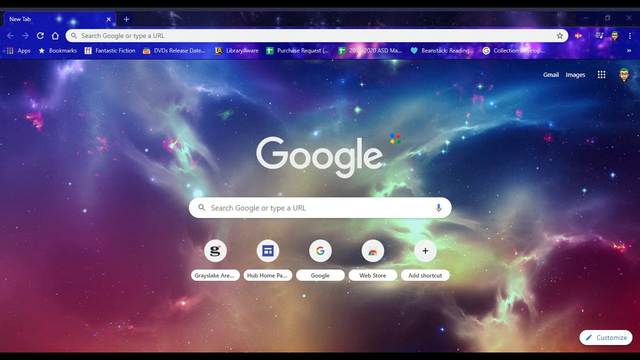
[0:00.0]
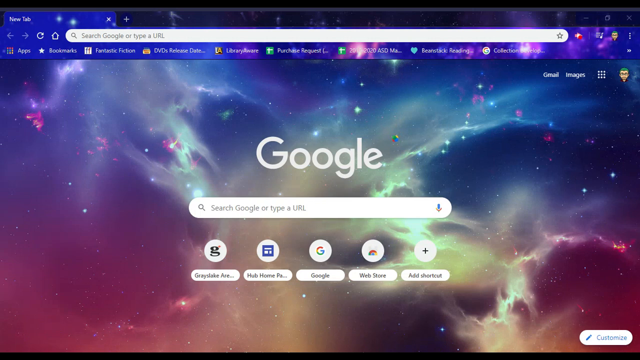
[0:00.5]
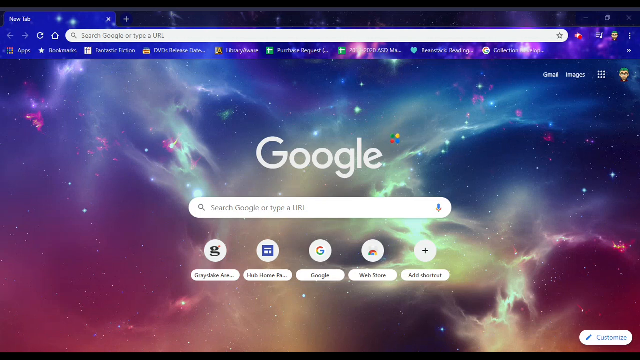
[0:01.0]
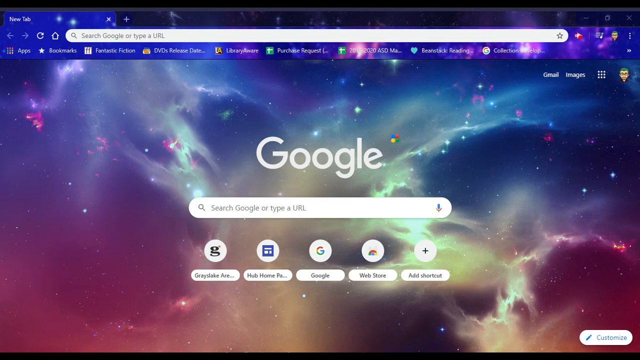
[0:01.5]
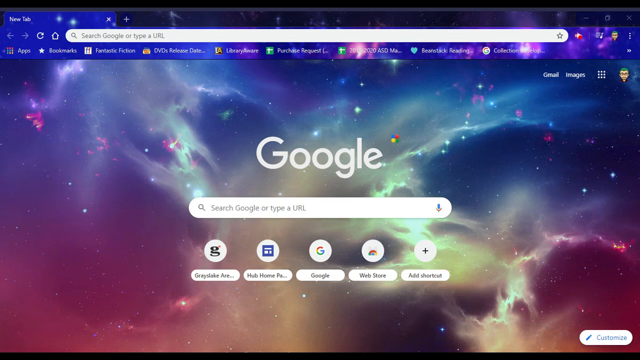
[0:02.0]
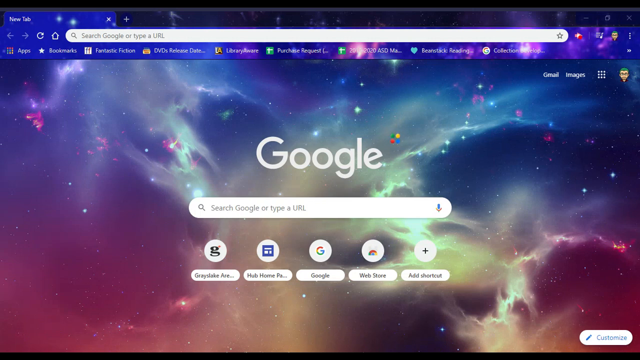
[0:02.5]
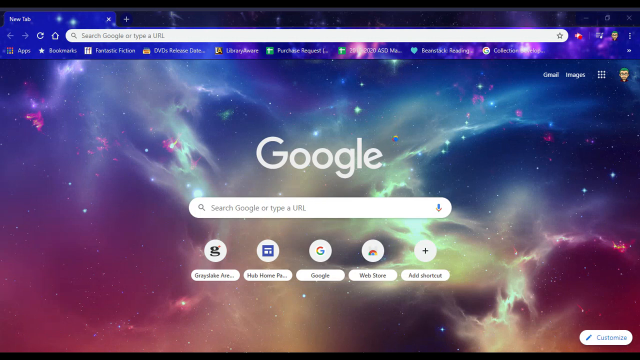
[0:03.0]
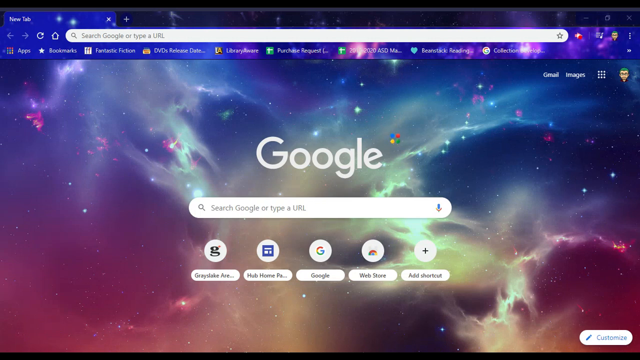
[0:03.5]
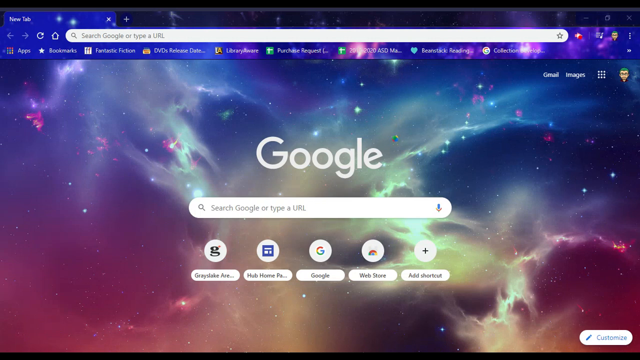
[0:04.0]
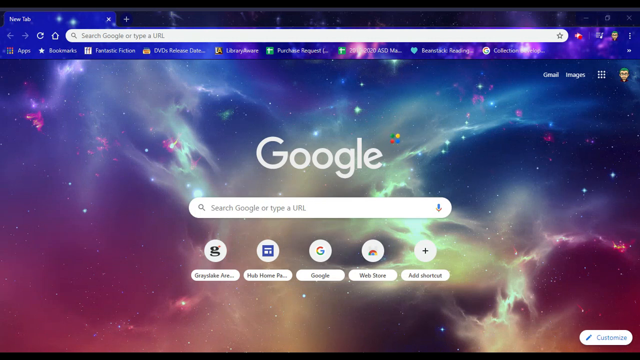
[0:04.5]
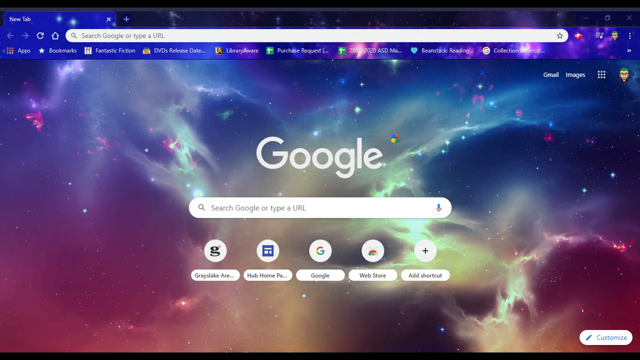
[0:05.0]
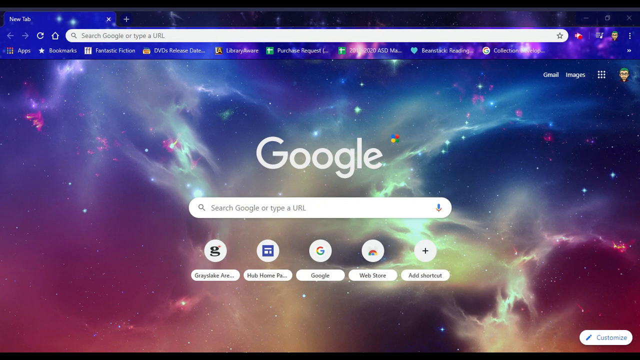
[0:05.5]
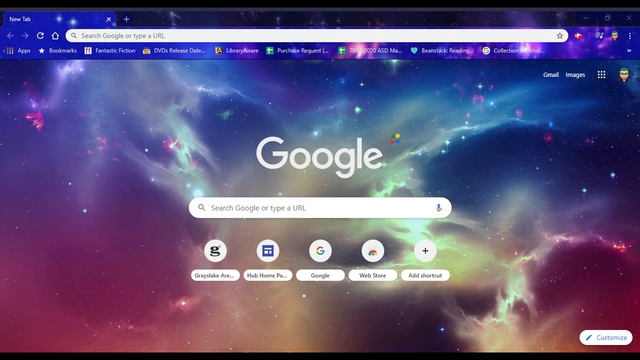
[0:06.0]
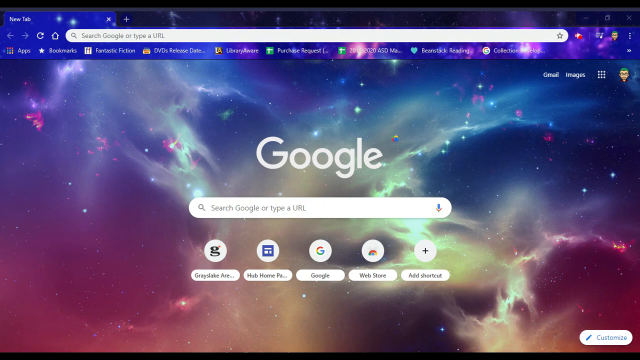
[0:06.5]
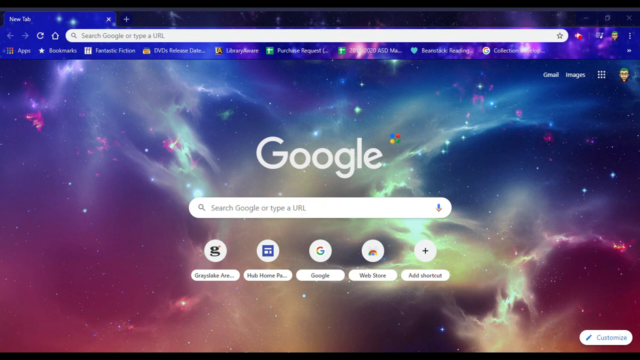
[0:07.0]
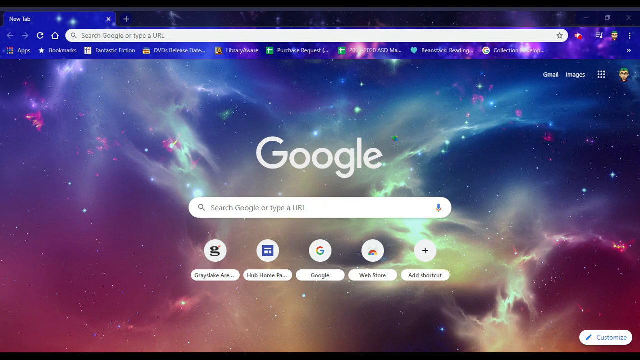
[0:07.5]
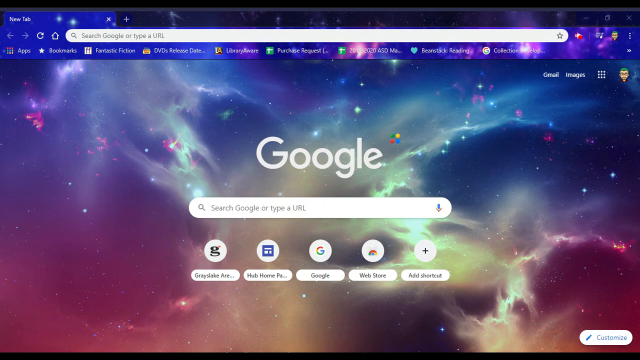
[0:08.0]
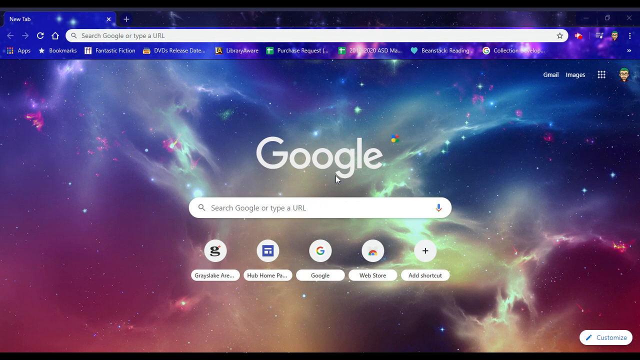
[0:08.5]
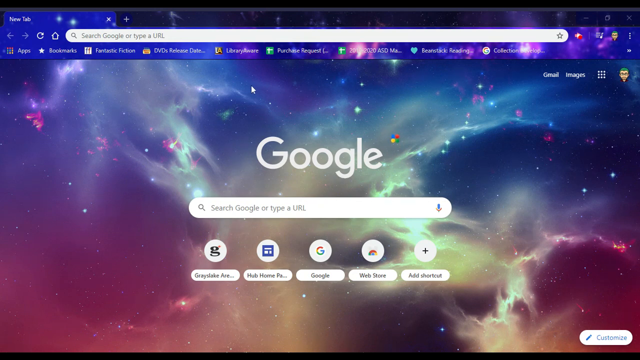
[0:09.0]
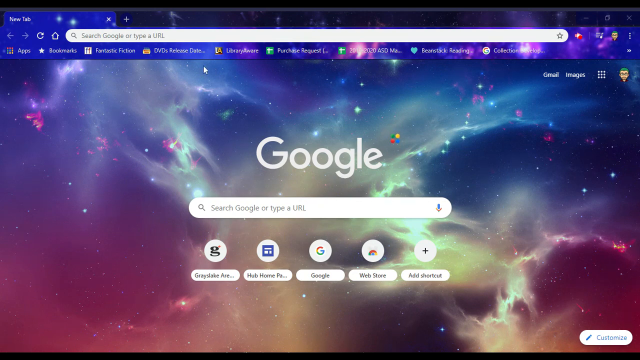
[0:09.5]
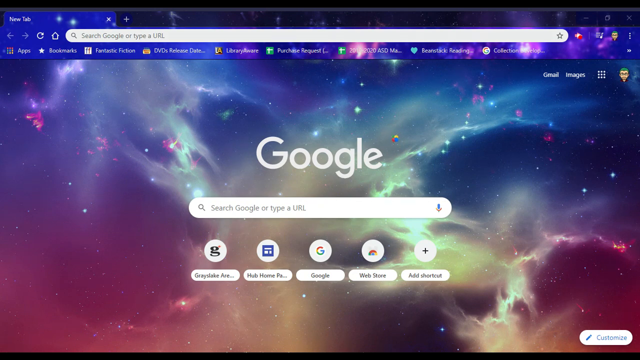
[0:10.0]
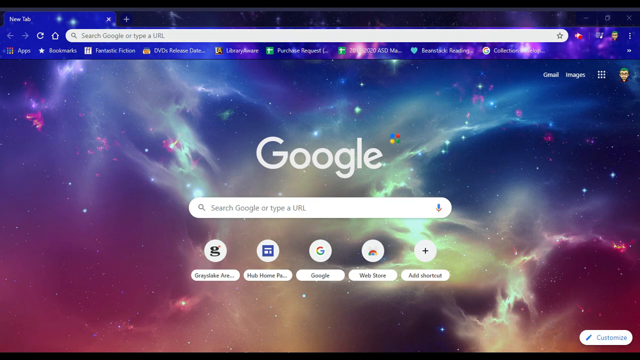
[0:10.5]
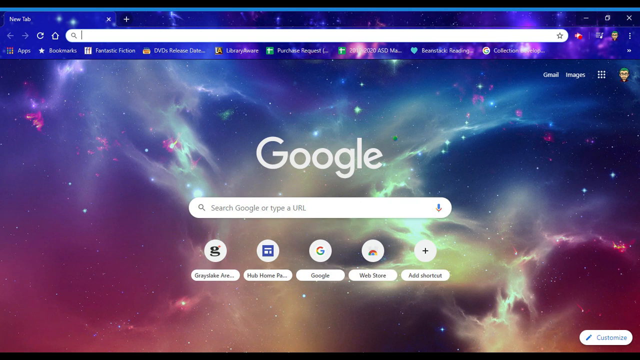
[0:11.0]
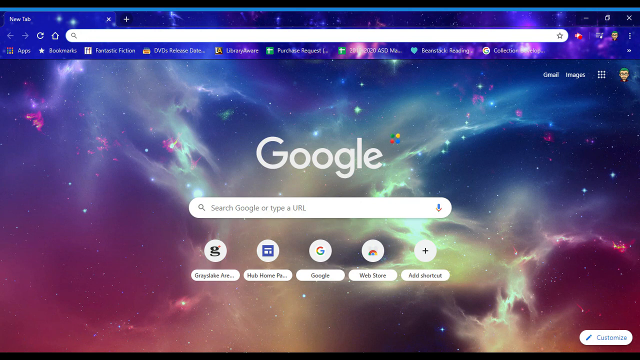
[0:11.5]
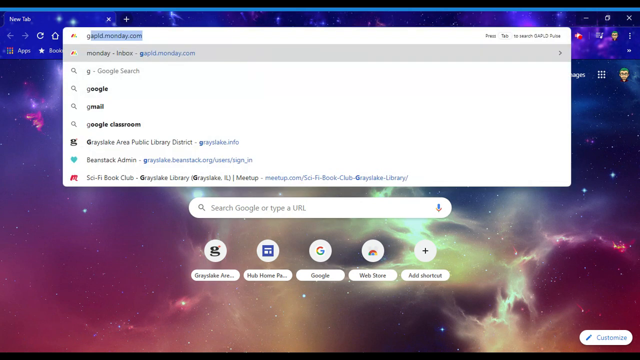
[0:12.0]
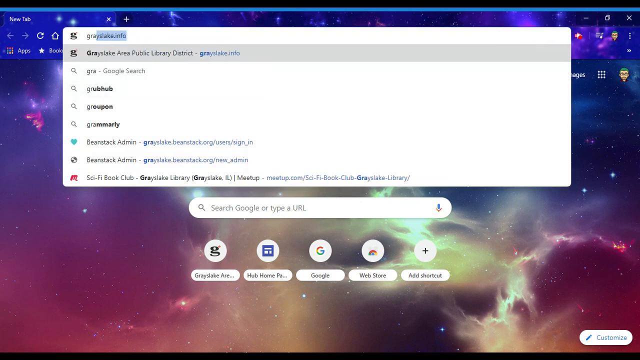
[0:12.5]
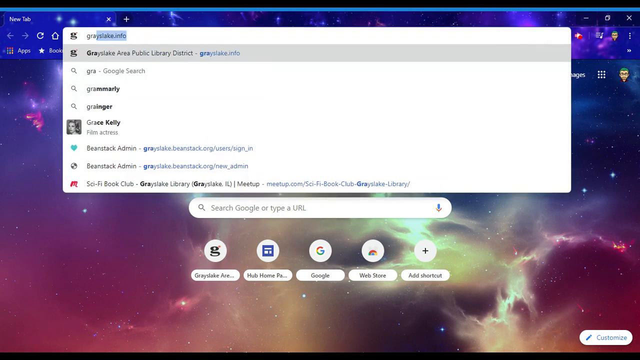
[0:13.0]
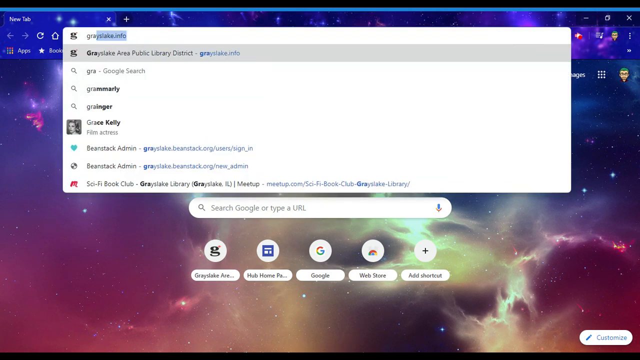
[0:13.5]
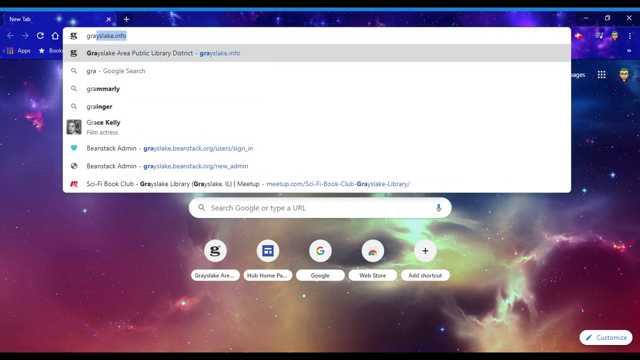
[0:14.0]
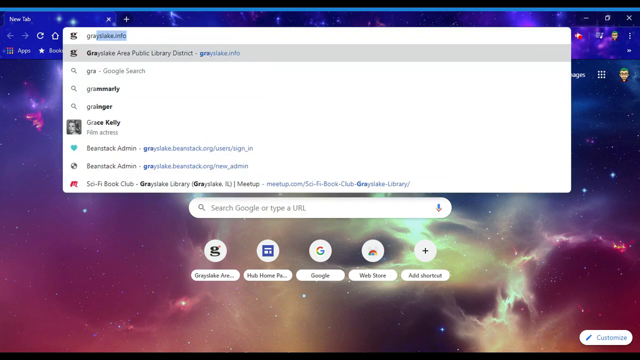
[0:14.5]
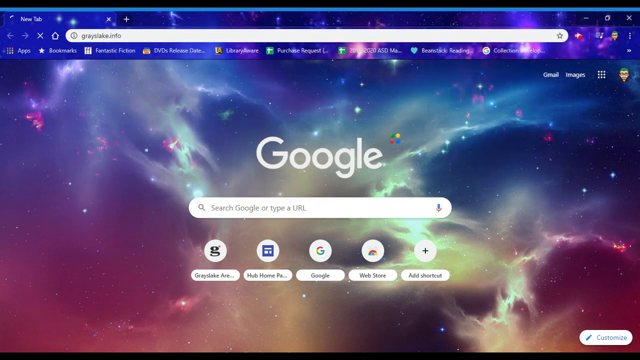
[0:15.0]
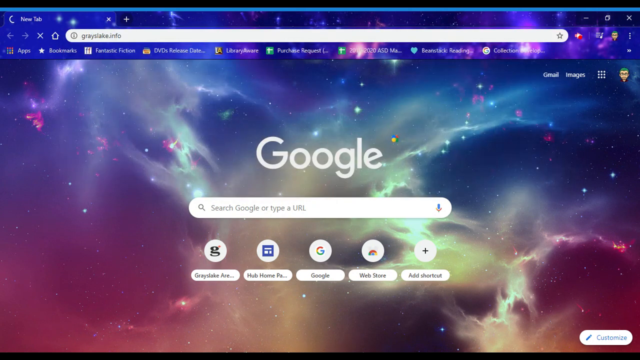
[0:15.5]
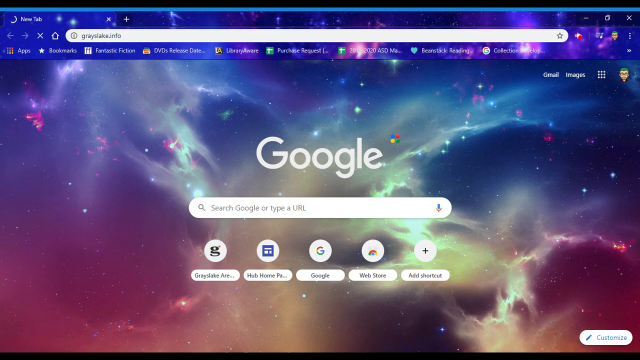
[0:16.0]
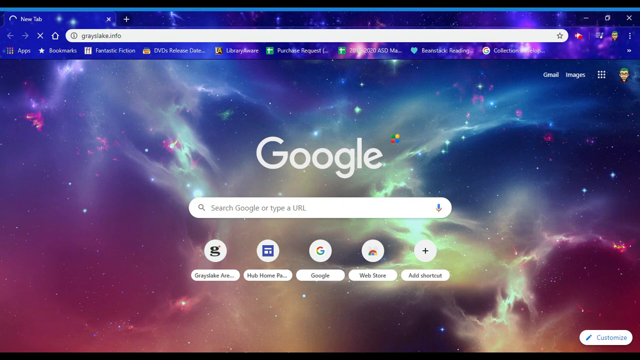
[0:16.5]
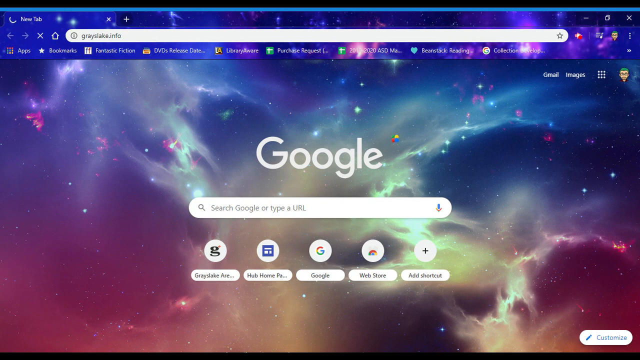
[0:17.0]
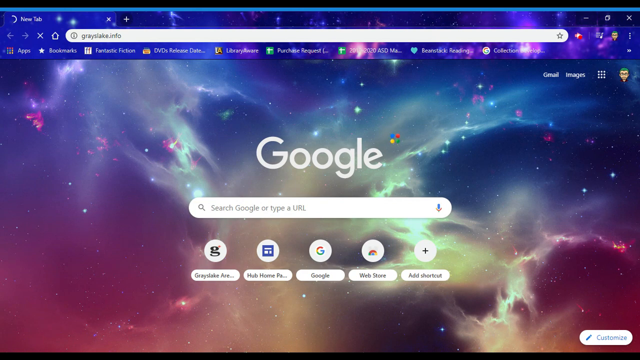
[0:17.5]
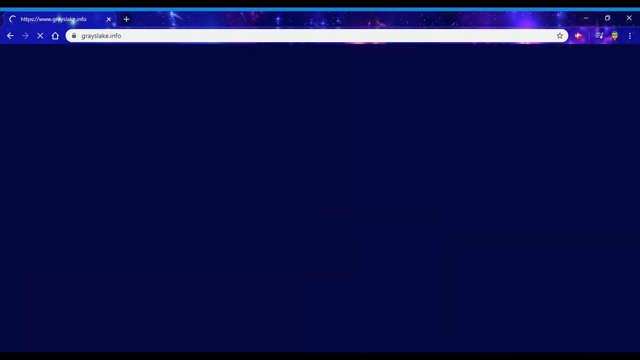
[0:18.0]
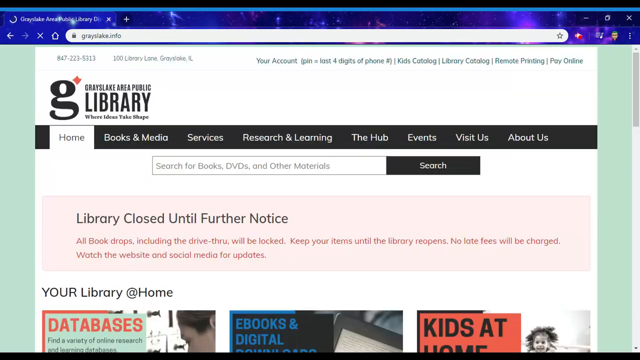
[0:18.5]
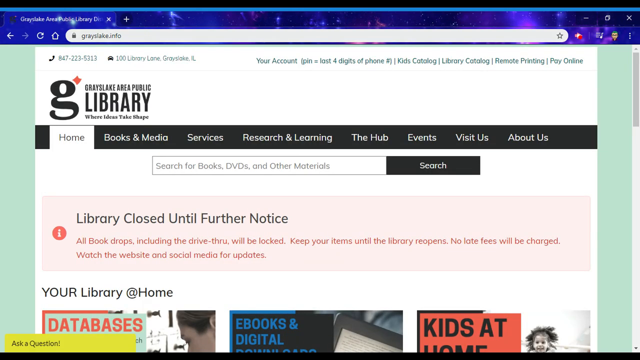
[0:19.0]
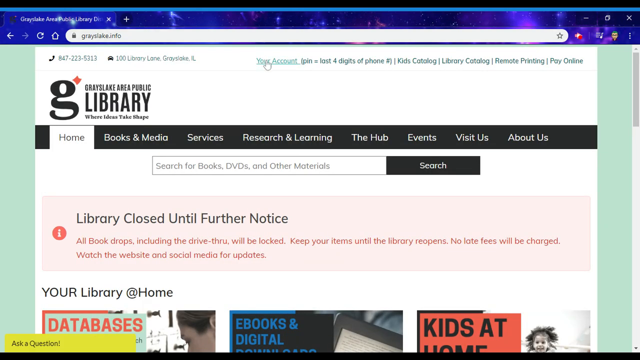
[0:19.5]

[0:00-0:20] The video opens on the Google home page in an internet browser with a galaxy background; it is unclear whether the browser is Firefox or Chrome. There is only one tab, and it is Google. The cursor goes up to the address bar and a website is typed in; the text is too small to read, but it appears to be a public library website, seemingly the Gray Lake Area Public Library. On that page there is text reading "library closed until further notice." The cursor hangs on this page, which has multiple tabs: books, media, services, research and learning, the hub, events, visit us, and about us.